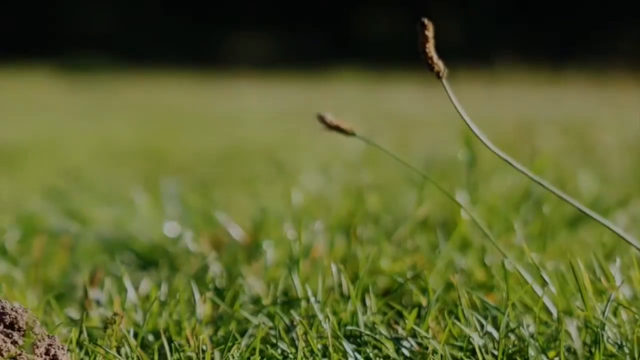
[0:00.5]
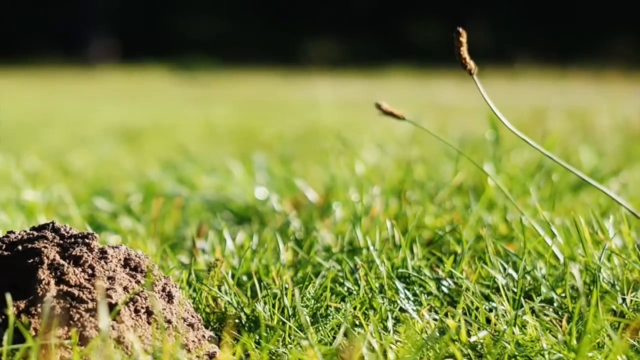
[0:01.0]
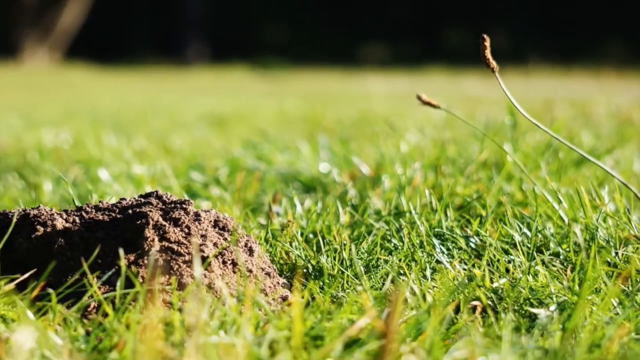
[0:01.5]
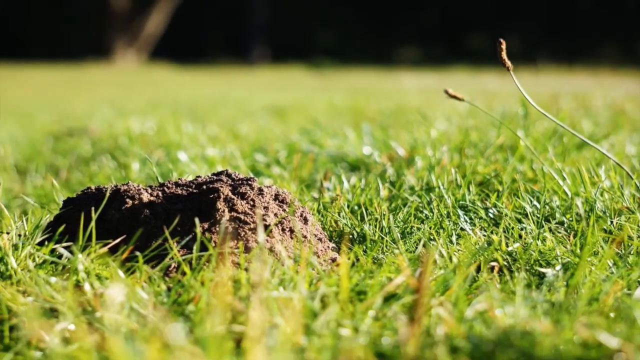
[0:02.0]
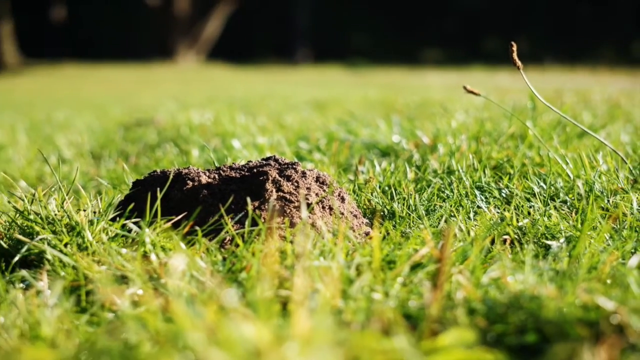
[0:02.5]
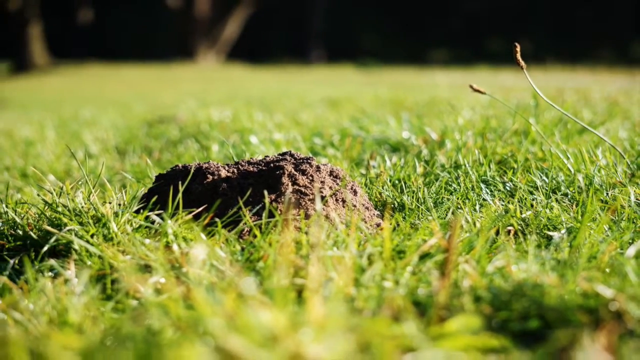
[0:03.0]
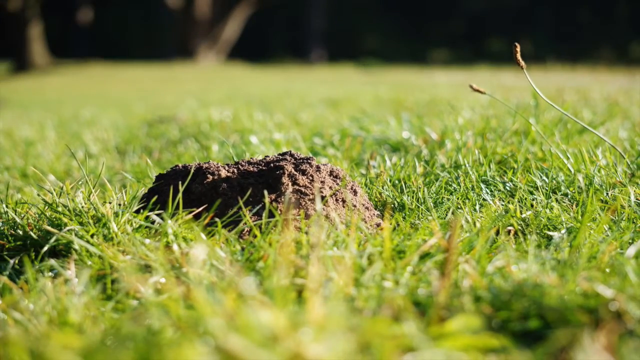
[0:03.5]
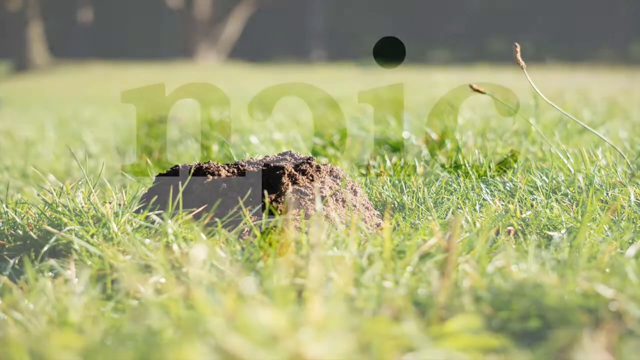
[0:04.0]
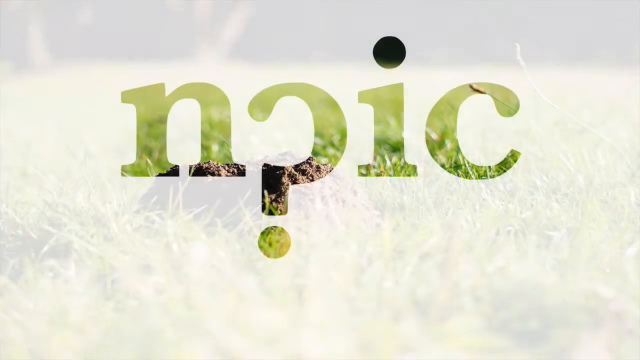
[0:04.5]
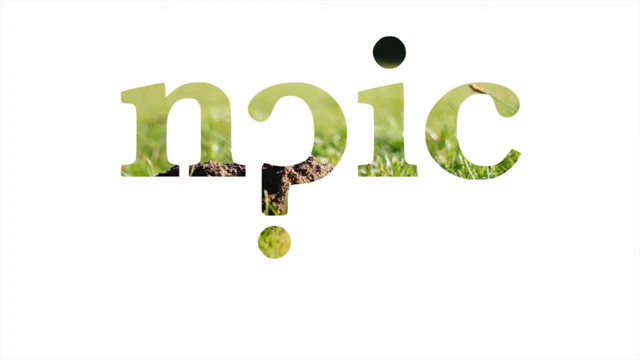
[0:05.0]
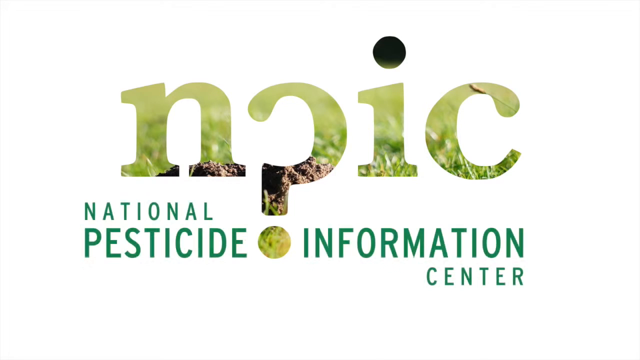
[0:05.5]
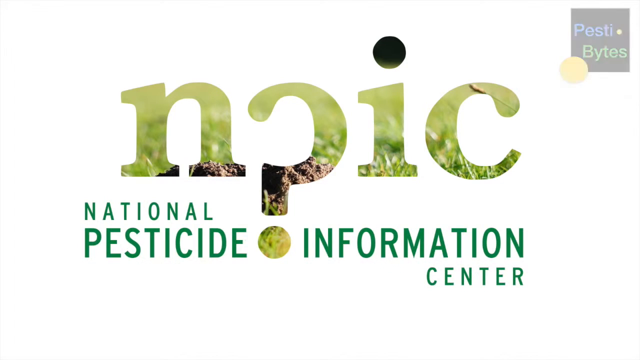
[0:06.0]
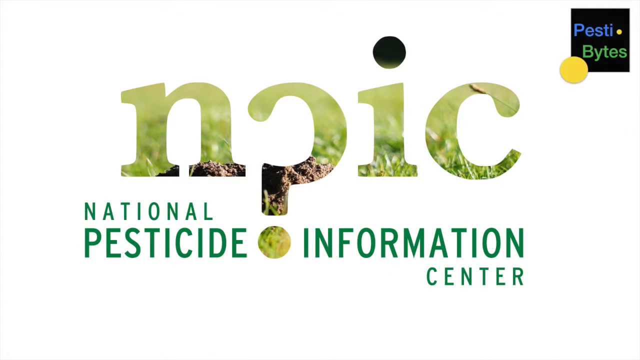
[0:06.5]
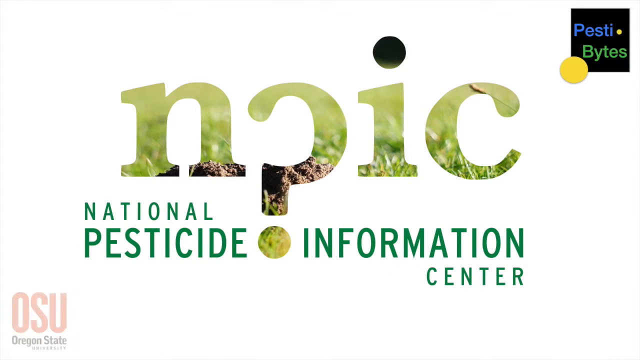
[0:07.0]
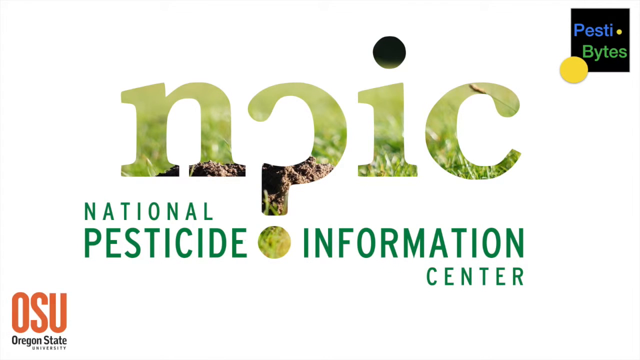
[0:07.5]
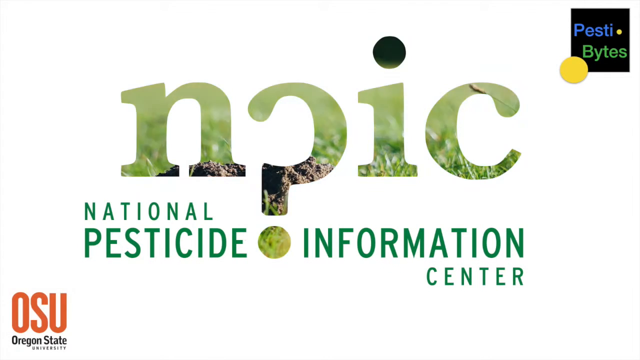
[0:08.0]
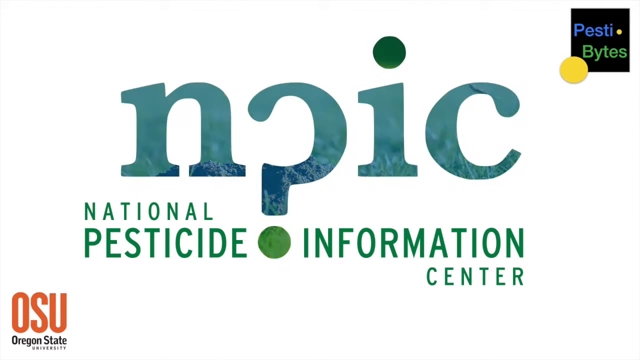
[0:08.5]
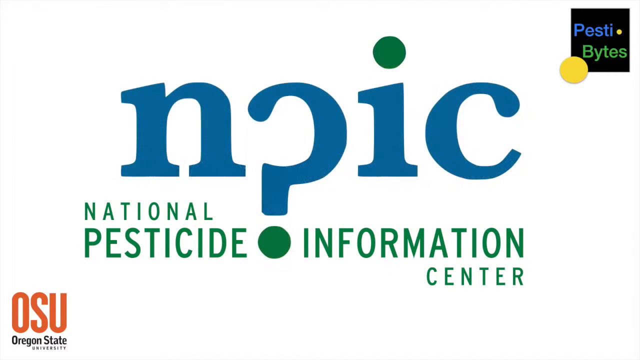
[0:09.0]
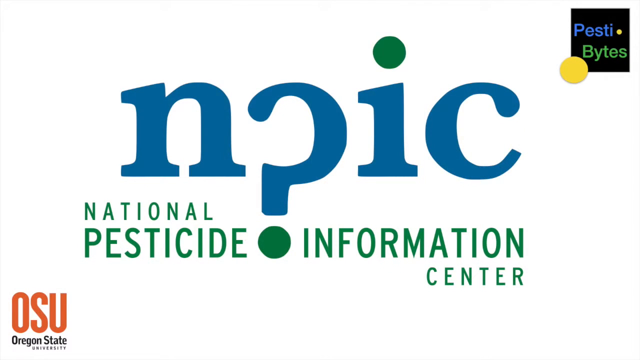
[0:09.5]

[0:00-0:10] The video opens on a black screen, and a photograph of grass fades in. On the left side, on the grass, is a mound of loose brown dirt. A white background screen then fades in, showing cut-out letters through which the grass behind is visible. New green text appears underneath, reading "National Pesticide Information Center." In the very top right, a logo appears: a black square with text inside that reads "Pesty Bytes." A logo then appears in the bottom left in orange text, reading "OSU, Oregon State University."